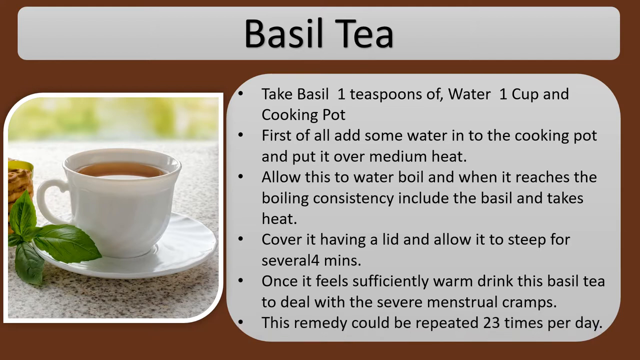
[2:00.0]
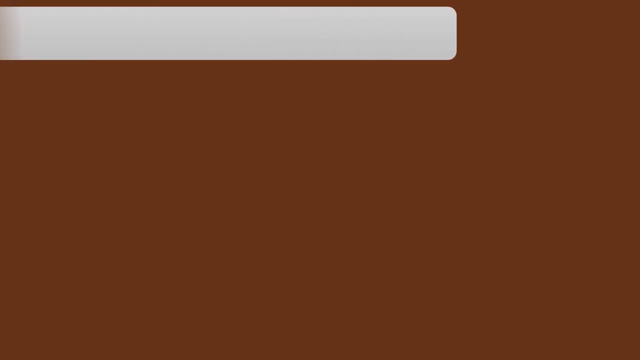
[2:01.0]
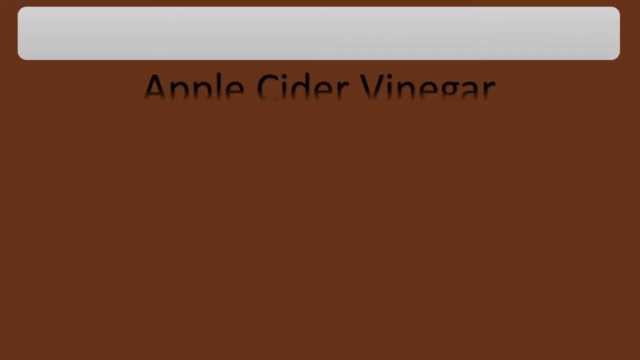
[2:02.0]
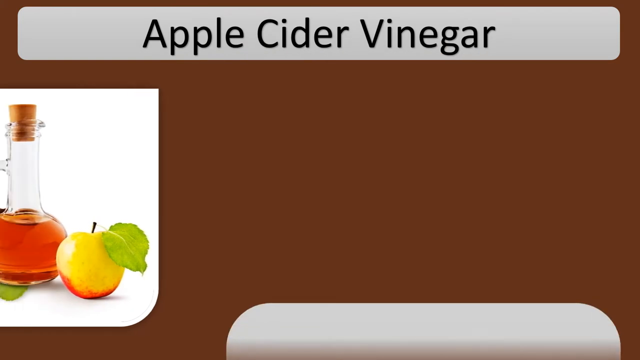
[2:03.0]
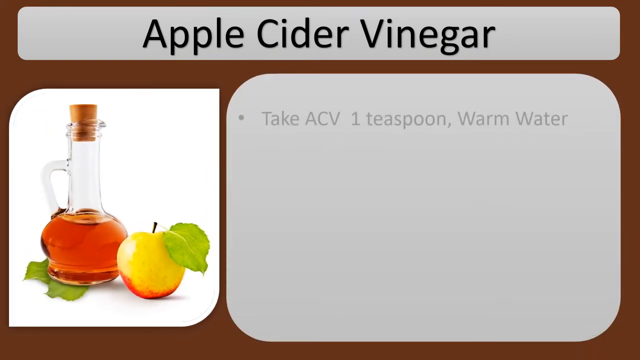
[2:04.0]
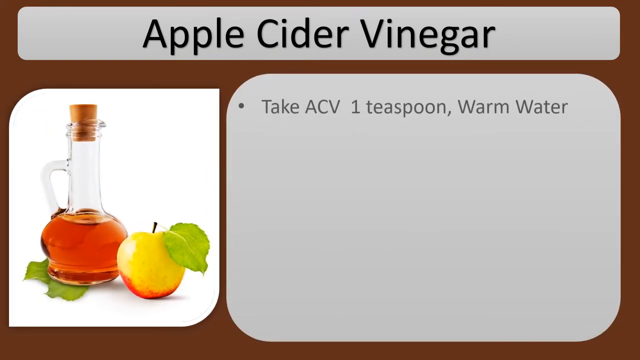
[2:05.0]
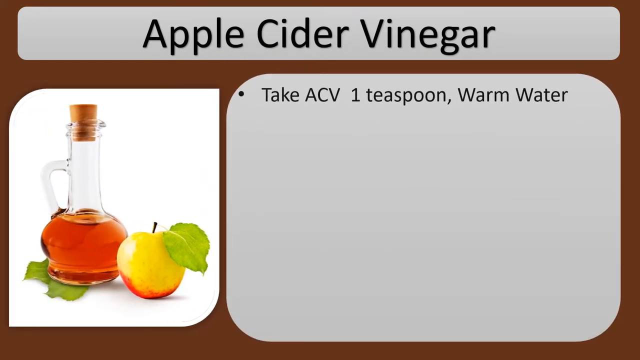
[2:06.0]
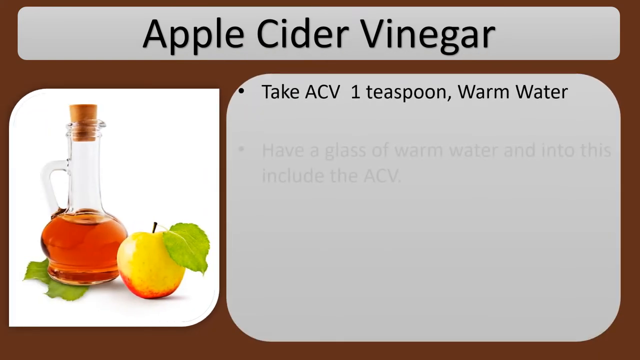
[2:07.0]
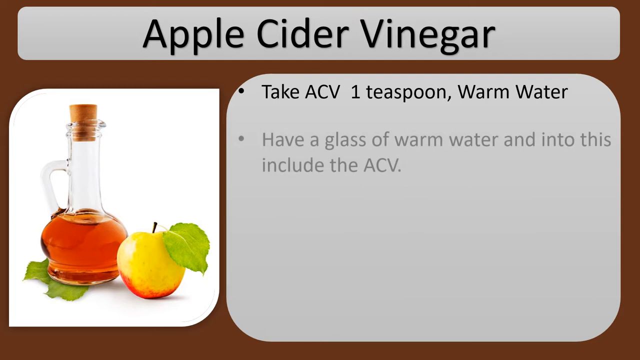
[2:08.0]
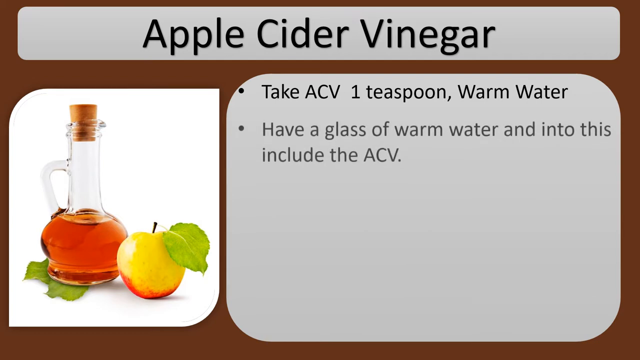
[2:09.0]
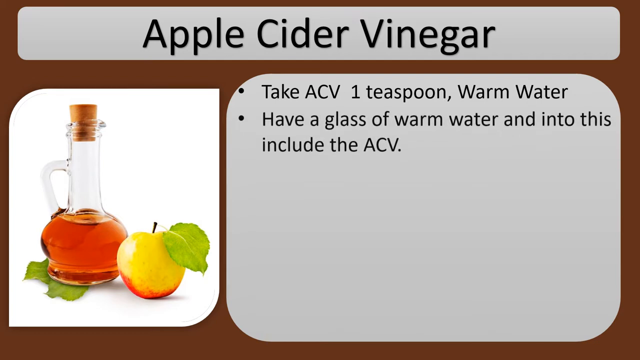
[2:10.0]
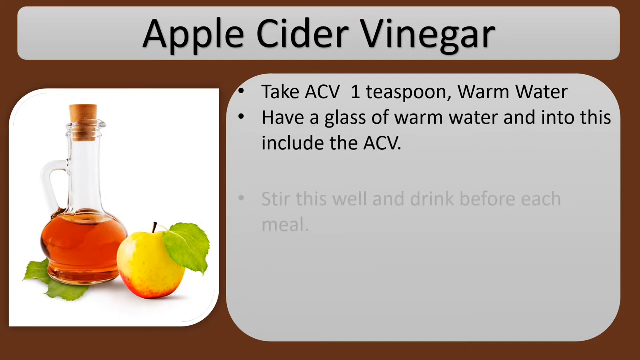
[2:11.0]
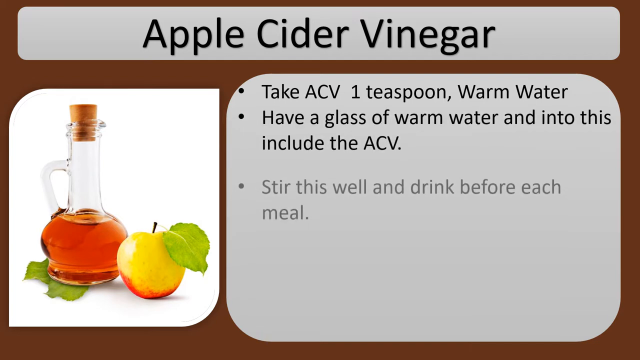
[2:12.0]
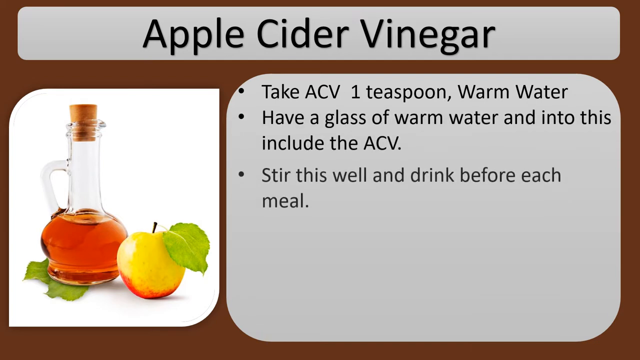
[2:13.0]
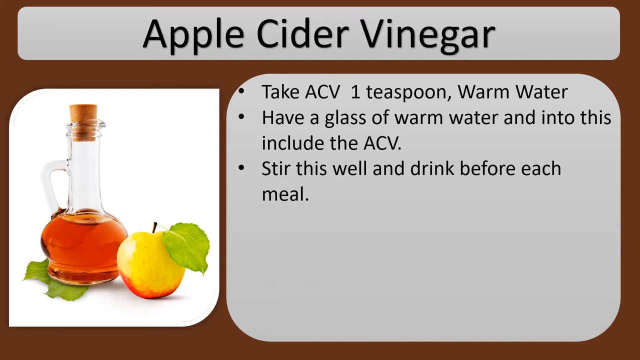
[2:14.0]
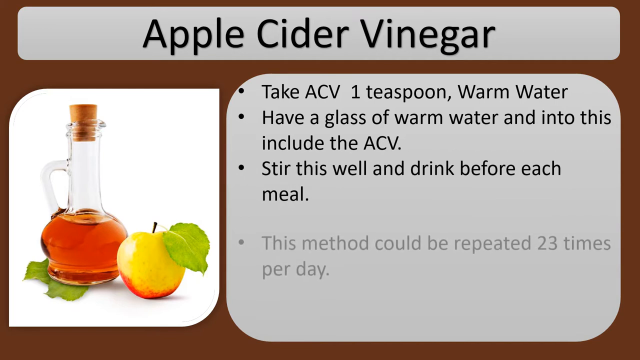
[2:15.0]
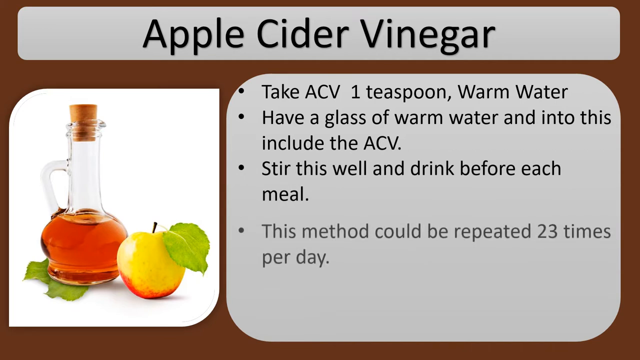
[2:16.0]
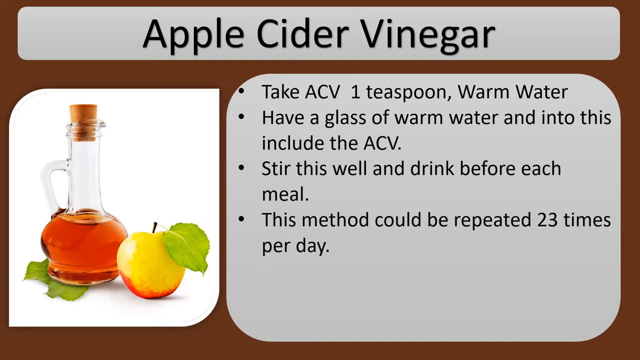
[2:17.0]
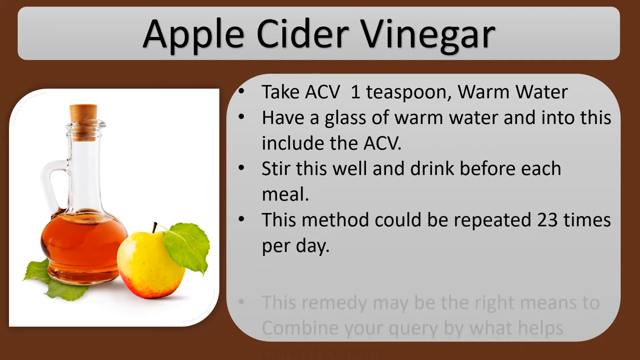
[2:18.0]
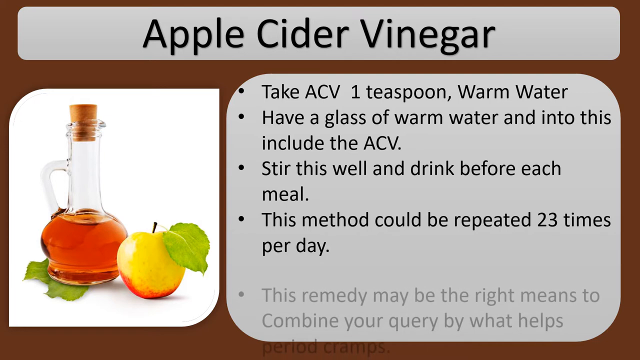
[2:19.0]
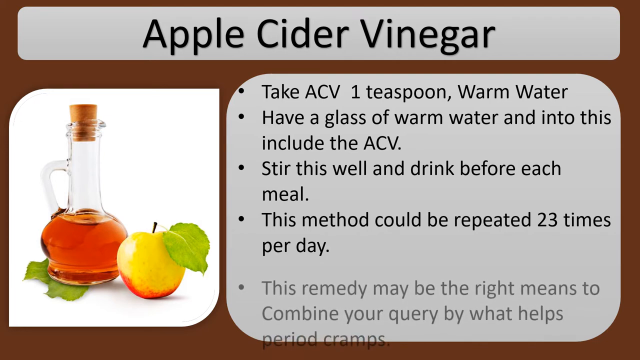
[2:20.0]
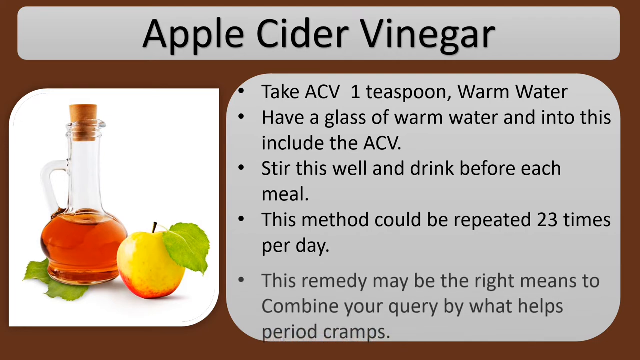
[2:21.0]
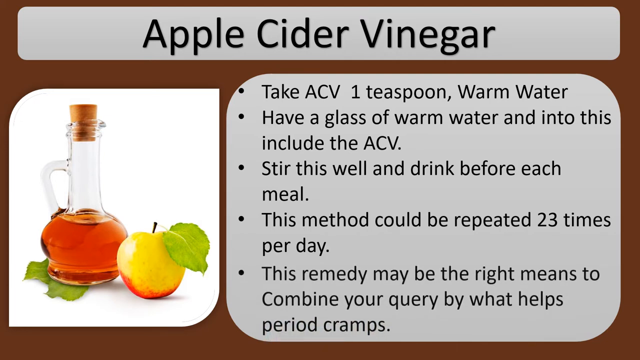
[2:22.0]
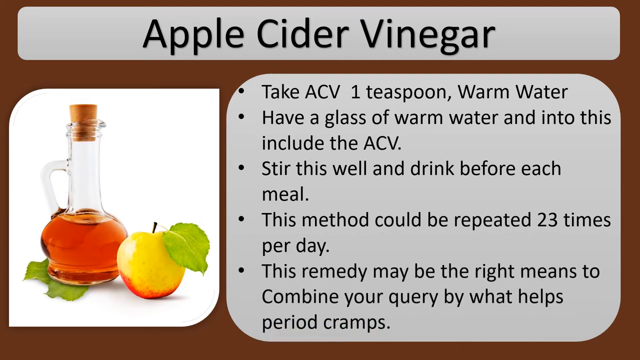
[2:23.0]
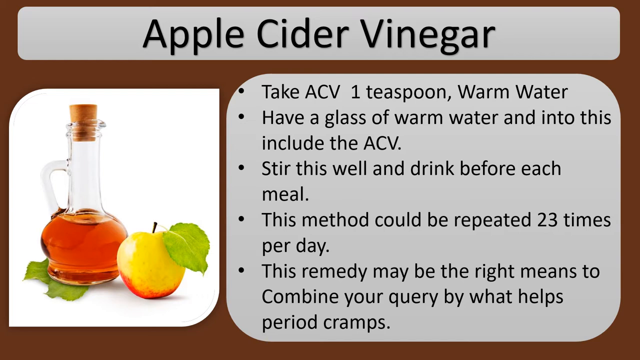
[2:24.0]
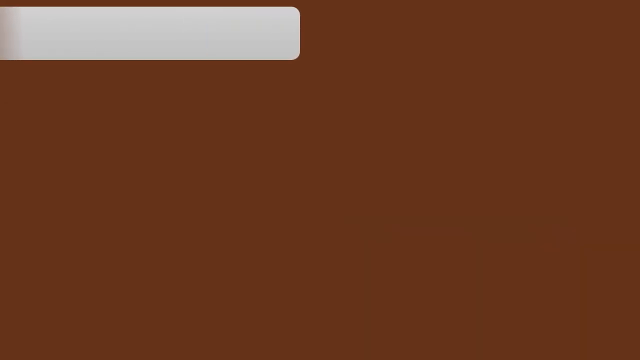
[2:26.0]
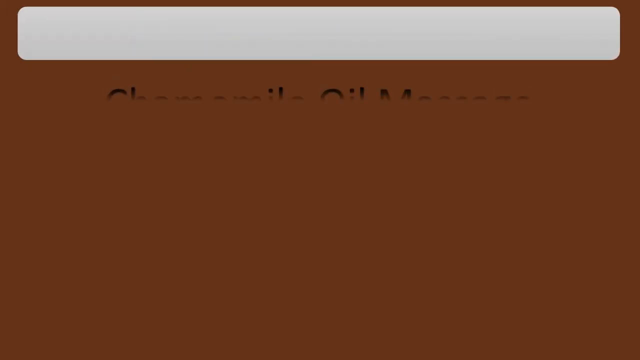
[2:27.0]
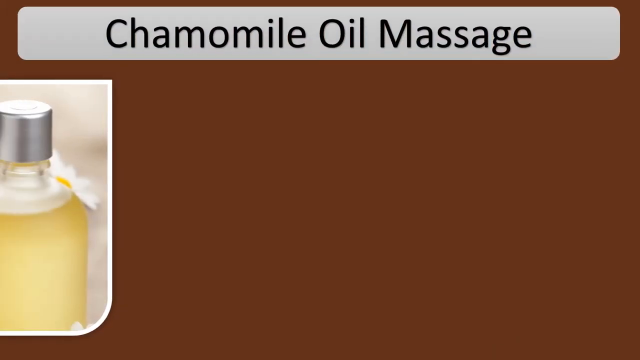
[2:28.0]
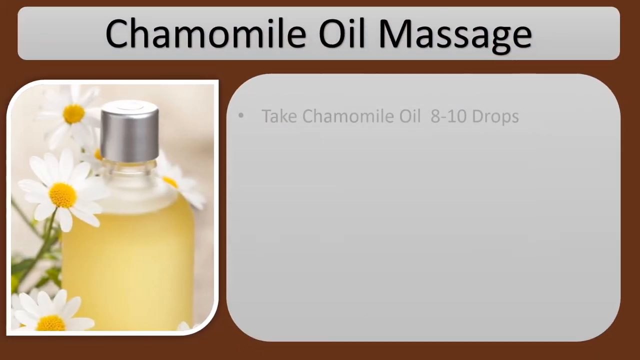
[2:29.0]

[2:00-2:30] The basil tea slide is still shown before a new recipe appears. On the left side is a small photo of a glass jug or carafe with a wooden cork in it; the bottle has a very wide rimmed body, a very long neck and a handle, and holds what is apparently apple cider vinegar. Next to the bottle is a yellow and red apple, maybe a Macintosh, with a leaf and stem coming out of it, and a leaf lies underneath the bottle. Bullet points then appear: "take apple cider vinegar, one teaspoon warm water, have a glass of warm water and into this include the apple cider vinegar. Stir this well and drink before each meal. This method could be repeated 23 times per day," followed by a point beginning "This remedy may be the right means."